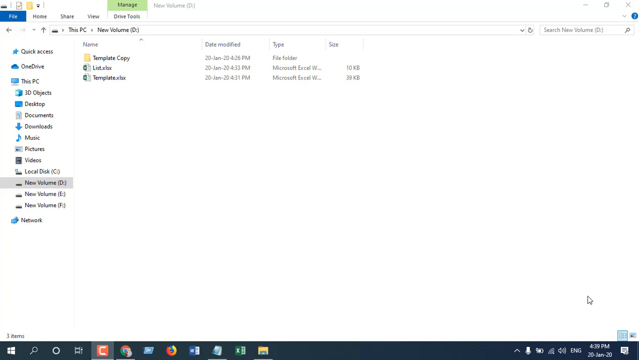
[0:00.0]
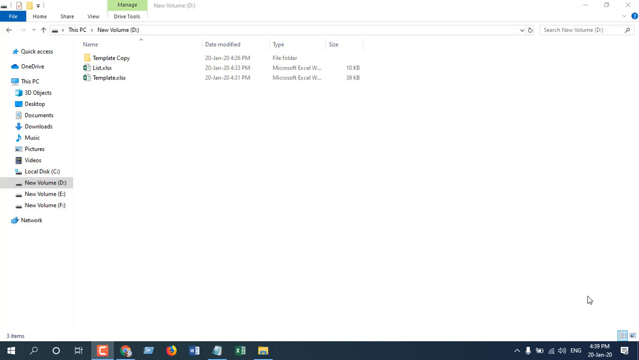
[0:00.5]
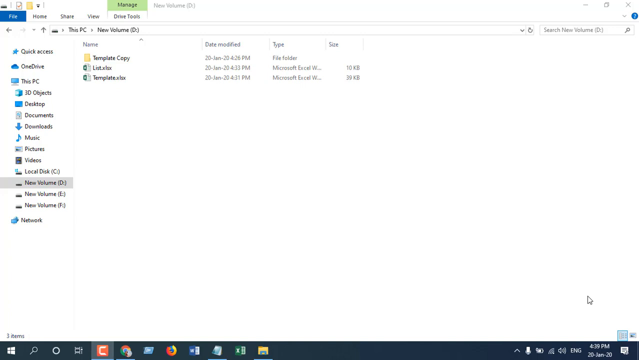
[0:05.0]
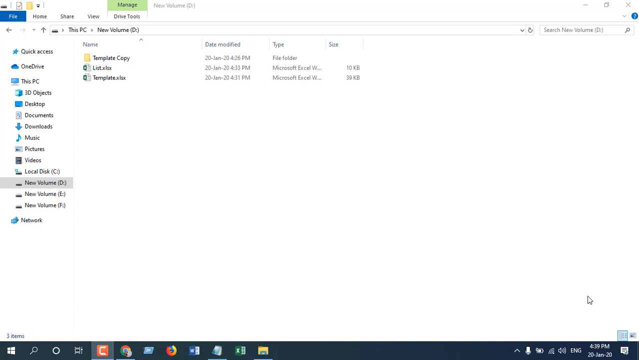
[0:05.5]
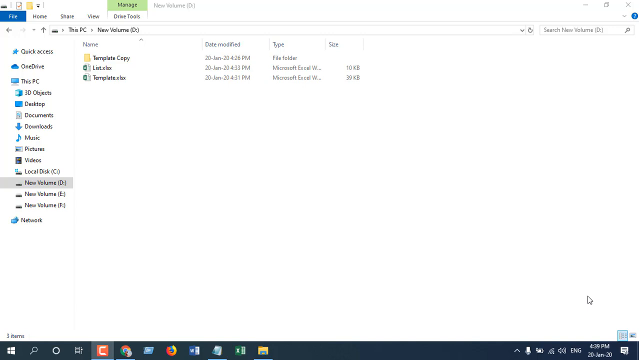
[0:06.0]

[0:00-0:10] The video, a screen recording, opens on File Explorer showing many different files. In the left pane, from the top, are Quick Access with a star icon, OneDrive with a cloud, This PC with a computer icon, 3D Objects with a cube next to it, Desktop with a screen, Documents with a paper next to it, Downloads with a blue down-pointing arrow, Music with a blue note next to it, Pictures, and Videos. Then comes Local Disk C, and under it New Volume D, New Volume E and New Volume F, and finally Network.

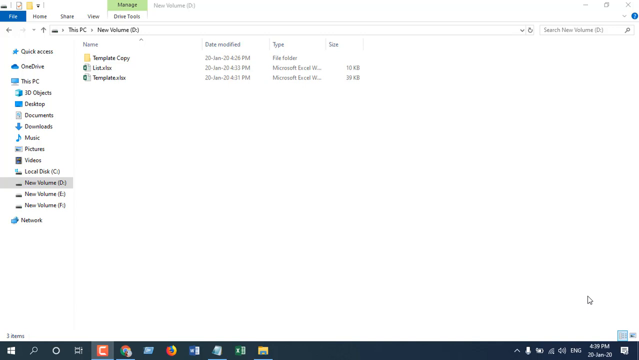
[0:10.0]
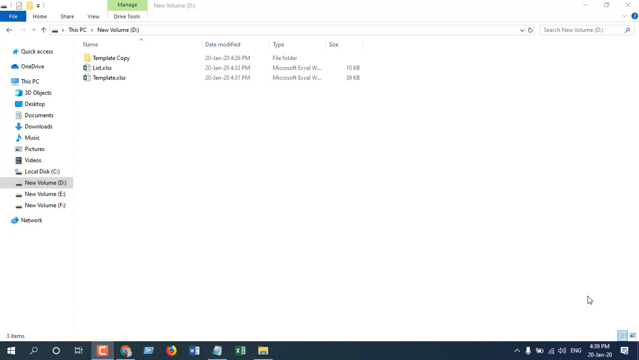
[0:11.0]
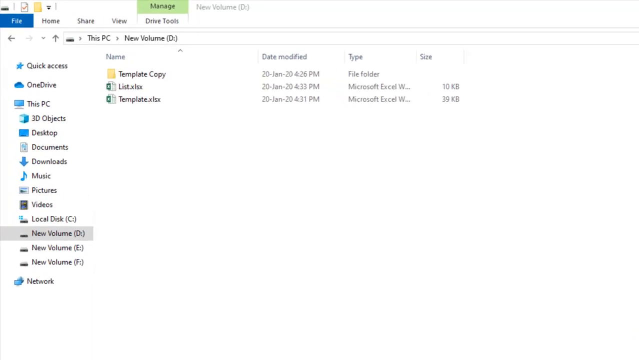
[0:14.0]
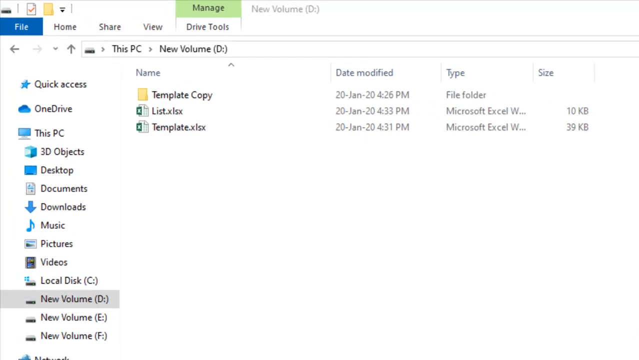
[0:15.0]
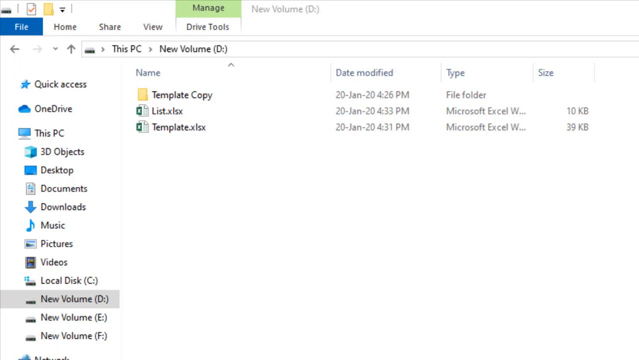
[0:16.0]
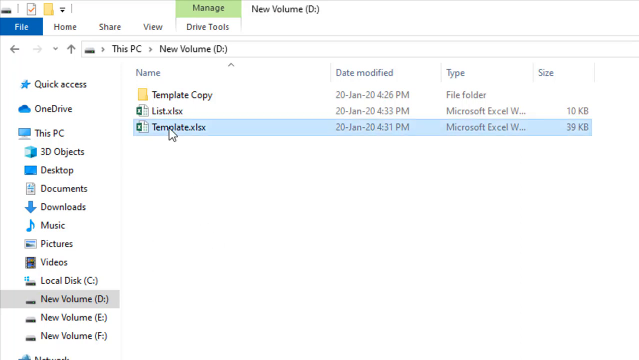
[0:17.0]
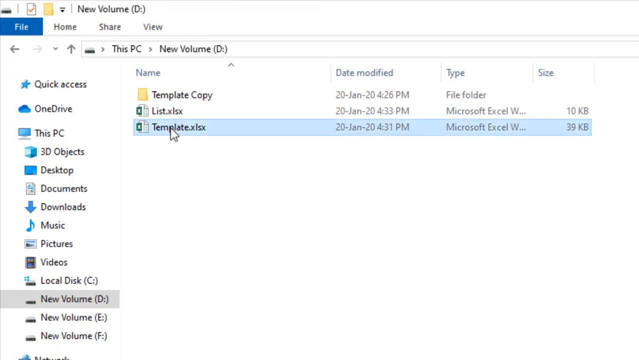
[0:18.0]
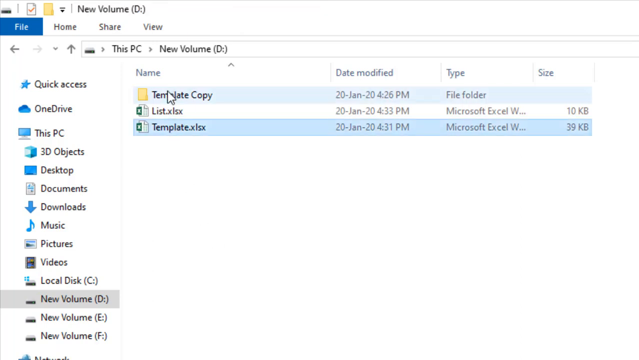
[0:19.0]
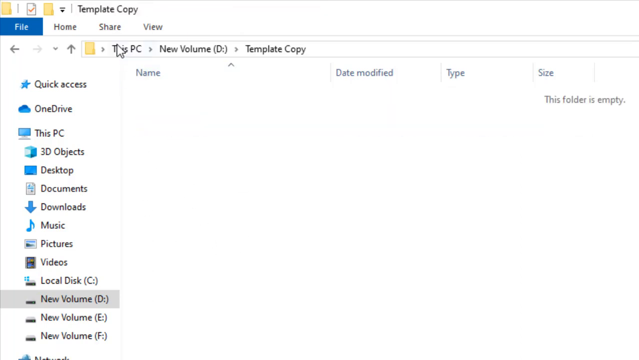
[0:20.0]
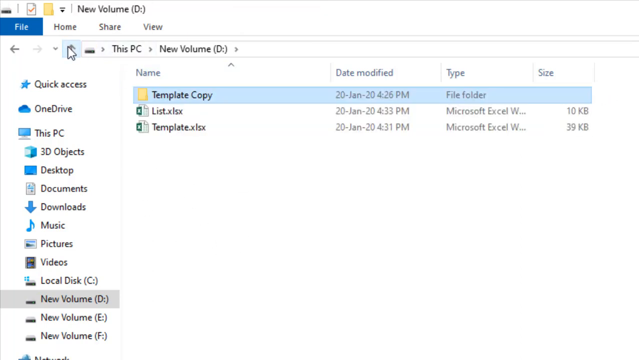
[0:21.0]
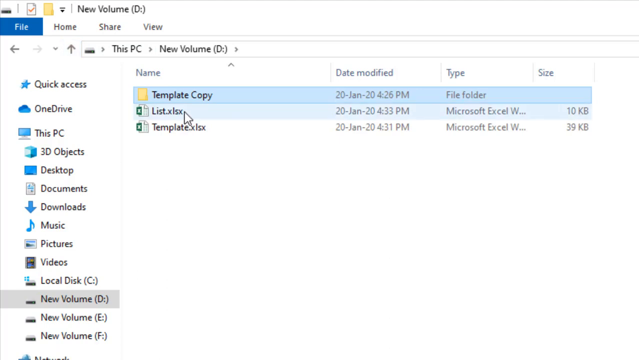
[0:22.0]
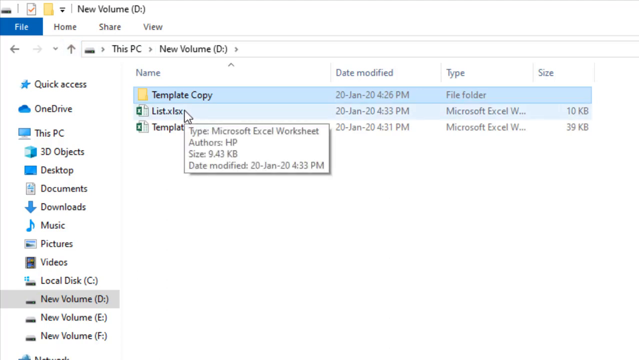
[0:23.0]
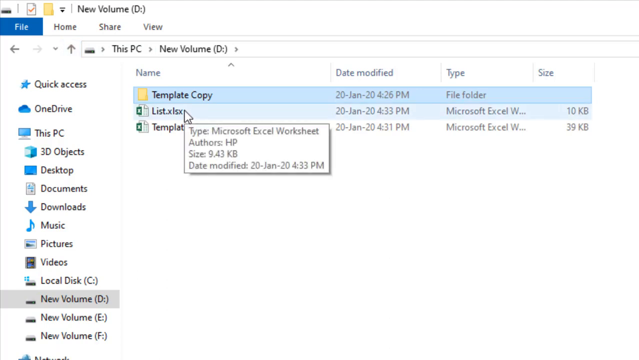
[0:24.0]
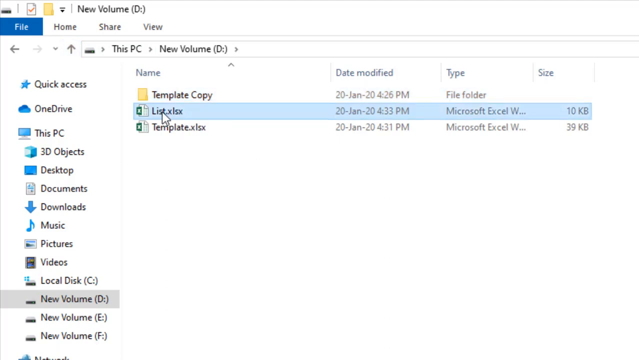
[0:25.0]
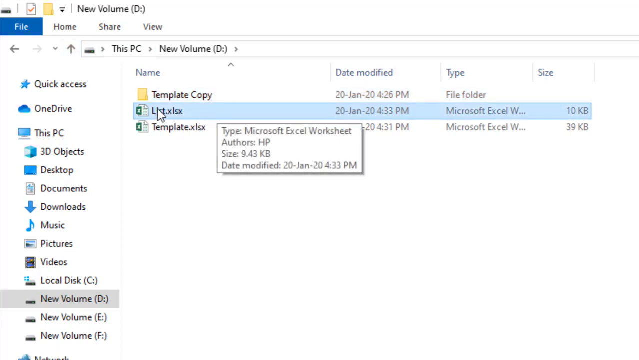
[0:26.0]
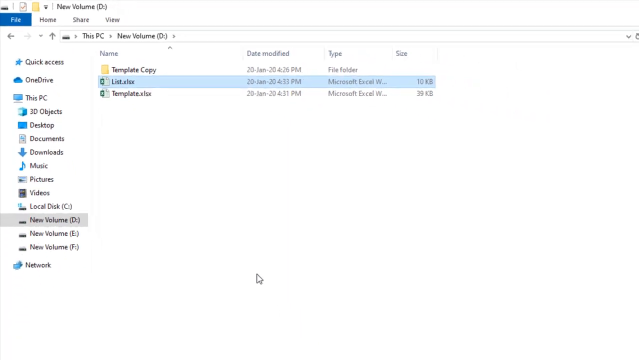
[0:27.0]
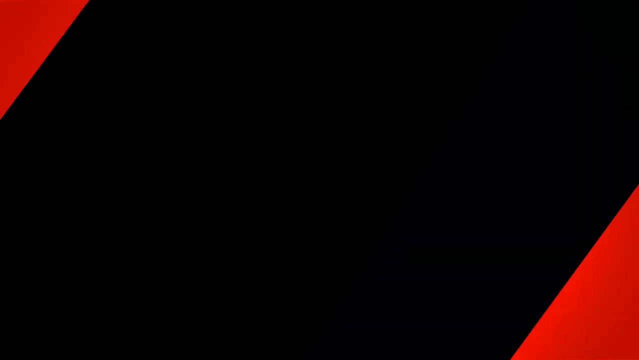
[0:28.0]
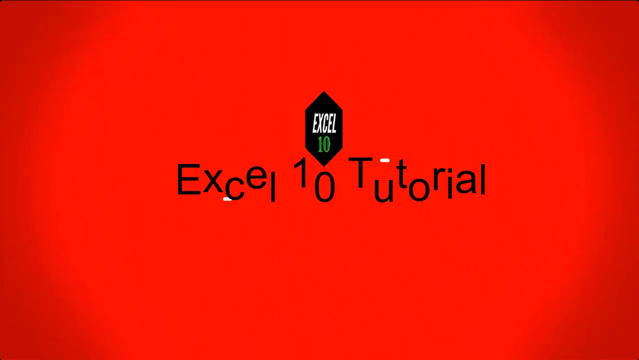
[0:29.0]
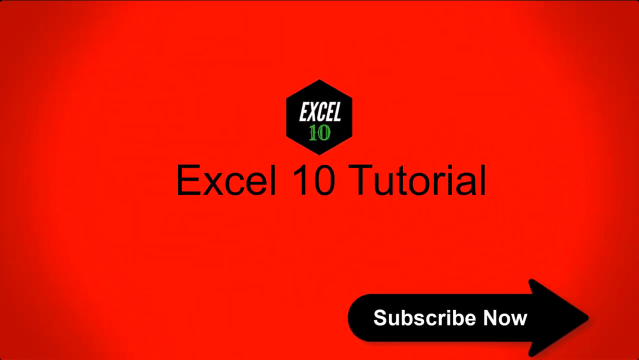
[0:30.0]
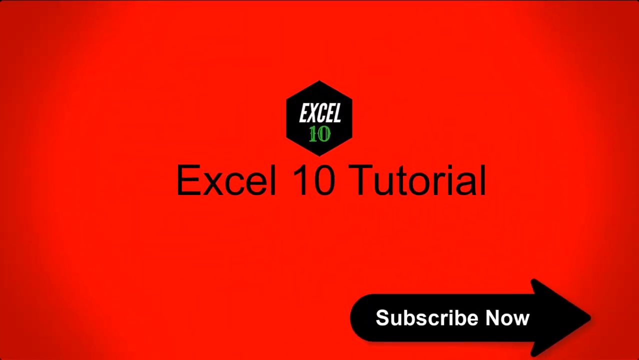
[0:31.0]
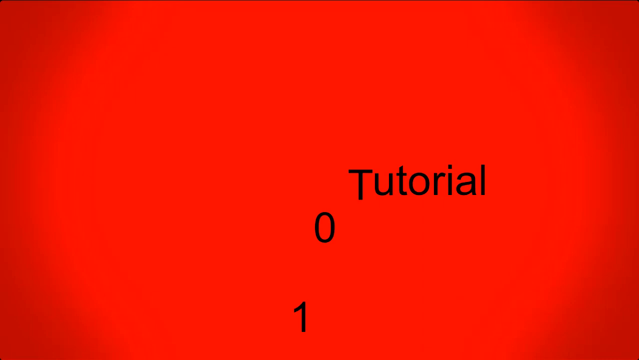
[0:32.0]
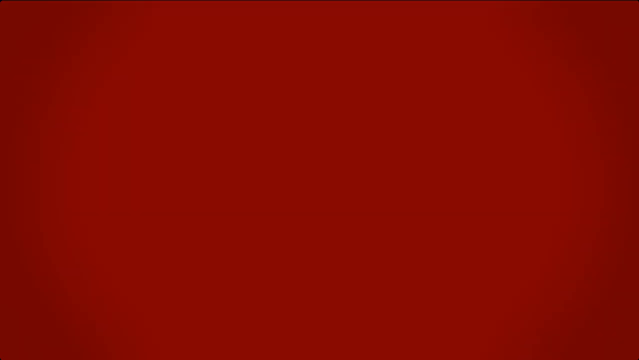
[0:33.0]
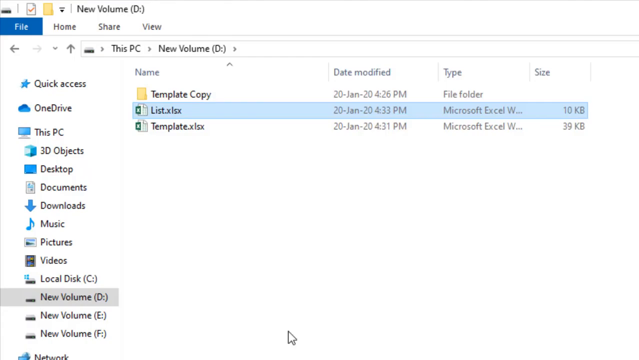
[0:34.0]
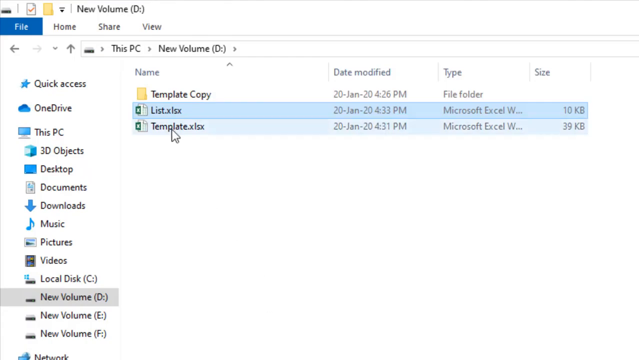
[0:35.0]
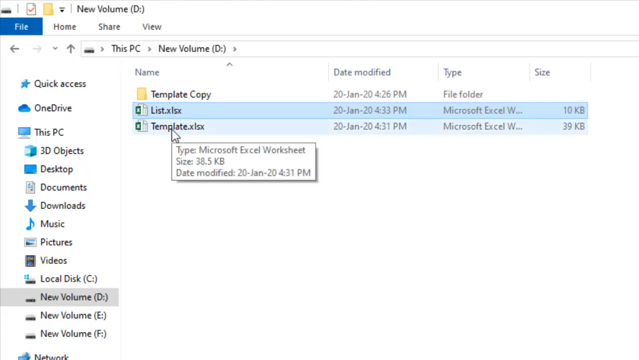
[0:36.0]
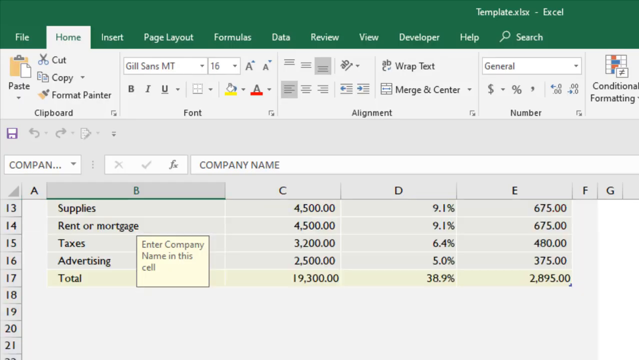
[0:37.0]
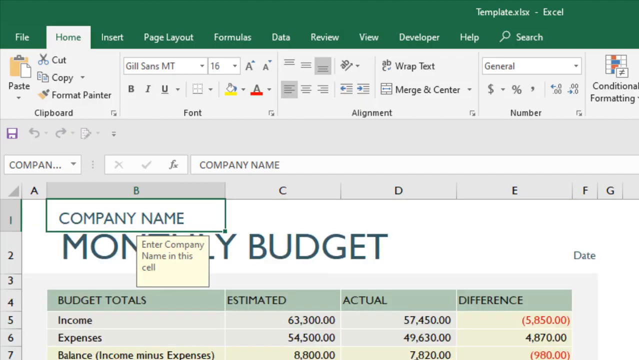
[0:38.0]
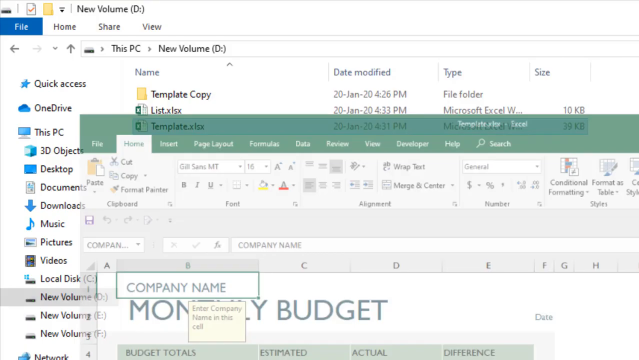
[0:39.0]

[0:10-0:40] The Volume D section is highlighted in dark gray. A blue square surrounds the File tab in the very top left corner, followed by the Home, Share and View tabs, and next to those a Tools tab with a green Manage box over top of it. In the middle of the screen is template copy, a file folder with a modified date of 20 January 20, 4.26 PM. Below it is an Excel sheet named list, modified 20 January 20, 4.33 PM, 10 kilobytes in size. Below that is the template Excel file, modified 20 January 20, 4.31 PM, of type Microsoft Excel Worksheet and 39 kilobytes in size. The mouse hovers in the bottom right corner.